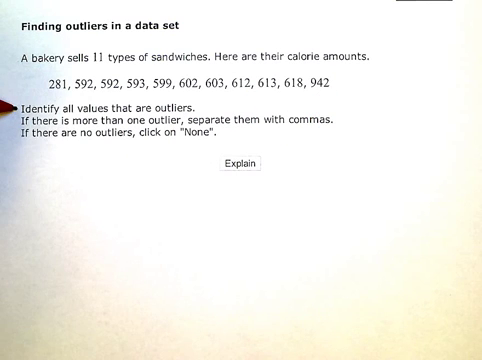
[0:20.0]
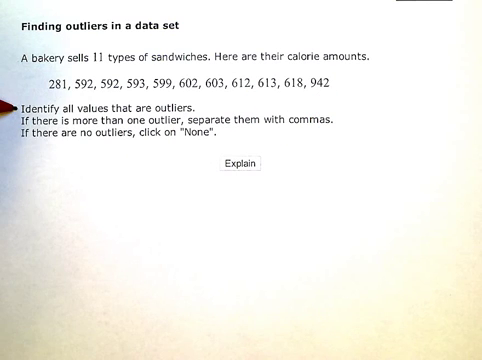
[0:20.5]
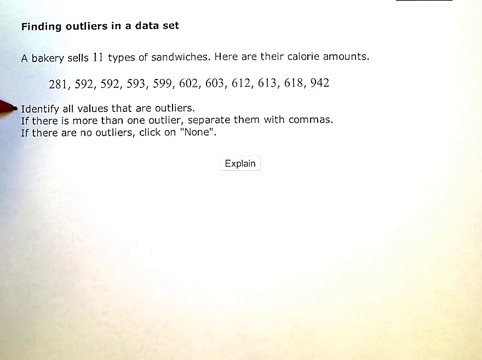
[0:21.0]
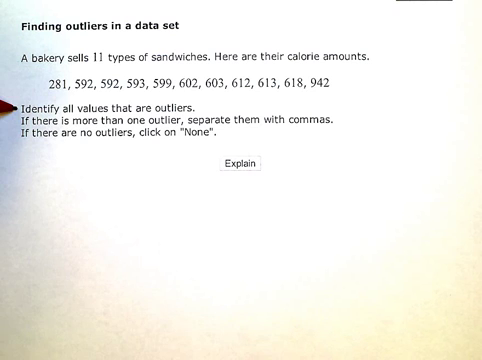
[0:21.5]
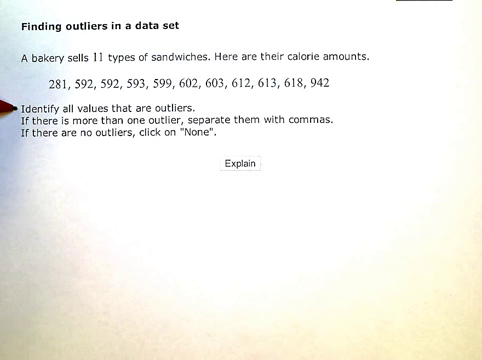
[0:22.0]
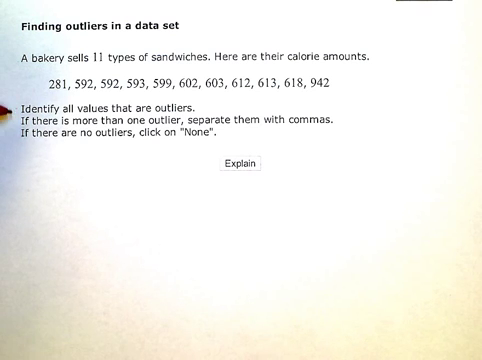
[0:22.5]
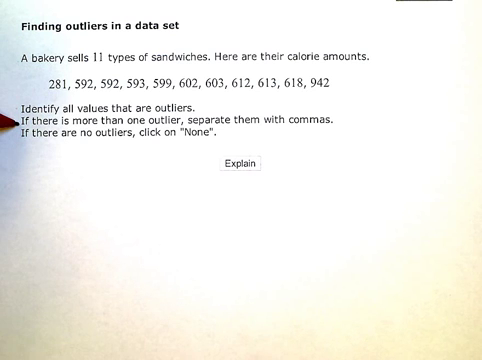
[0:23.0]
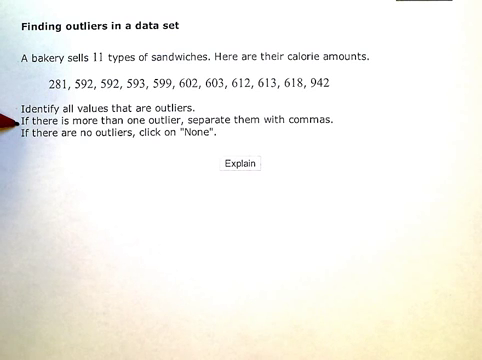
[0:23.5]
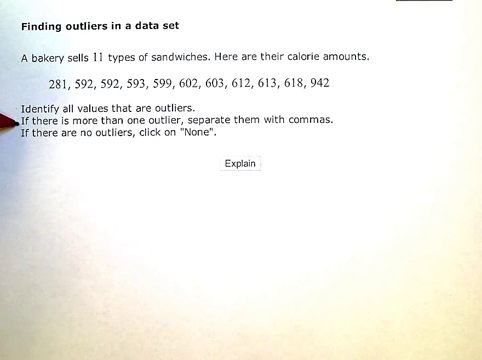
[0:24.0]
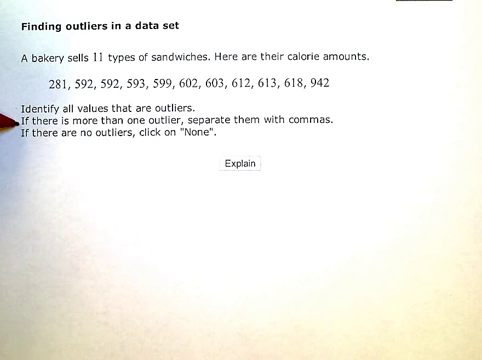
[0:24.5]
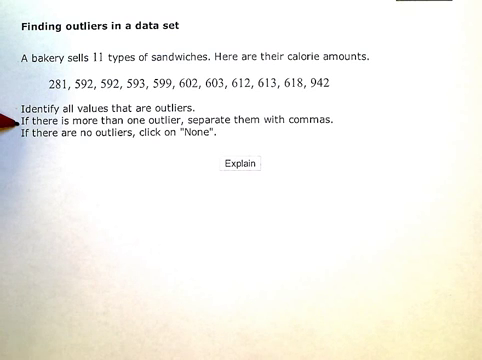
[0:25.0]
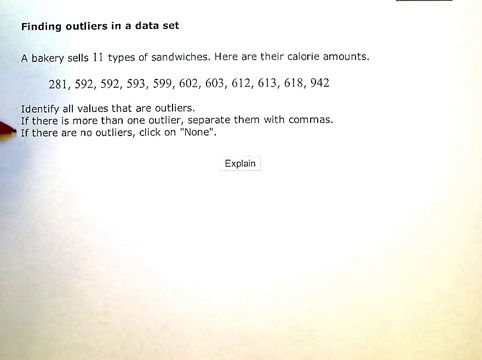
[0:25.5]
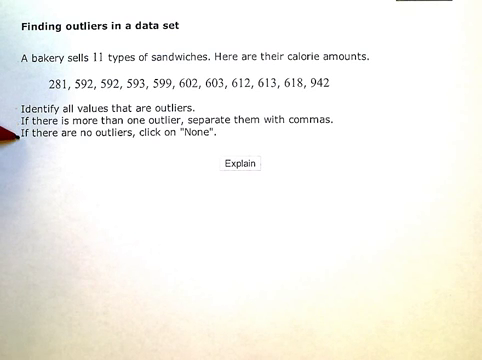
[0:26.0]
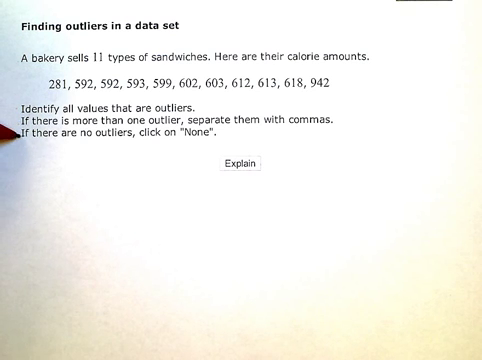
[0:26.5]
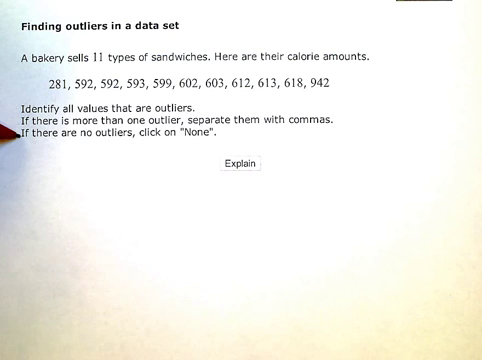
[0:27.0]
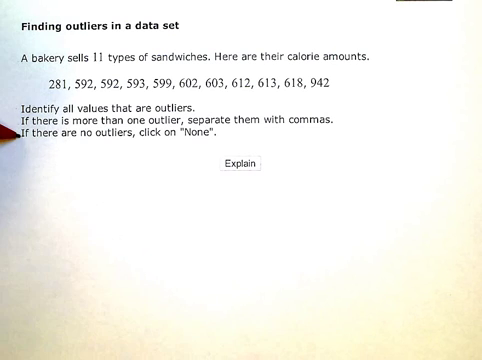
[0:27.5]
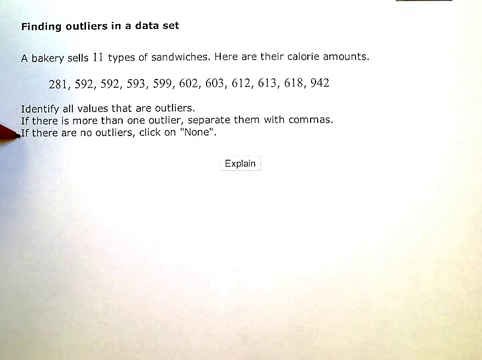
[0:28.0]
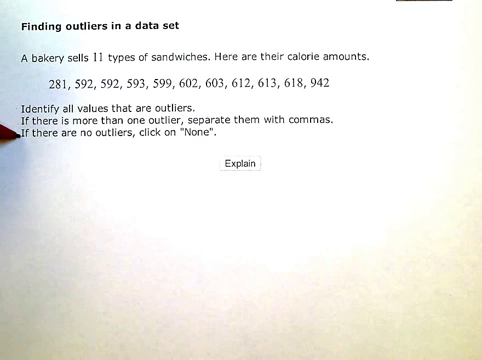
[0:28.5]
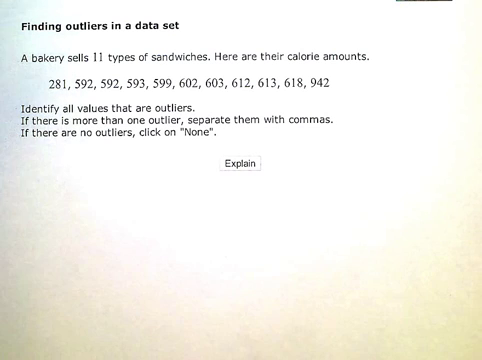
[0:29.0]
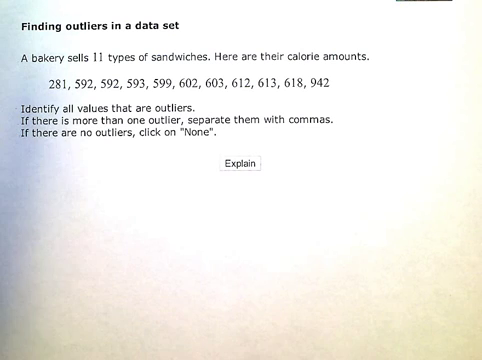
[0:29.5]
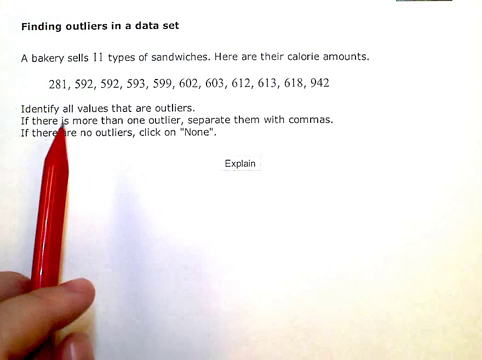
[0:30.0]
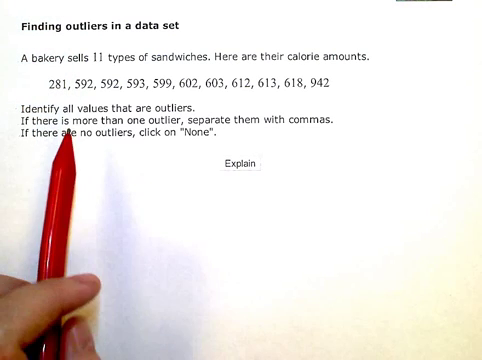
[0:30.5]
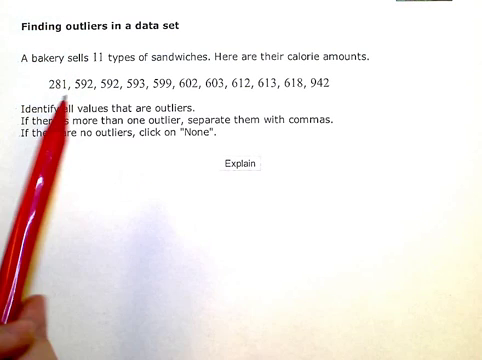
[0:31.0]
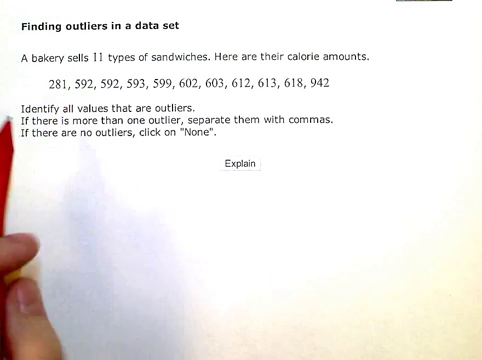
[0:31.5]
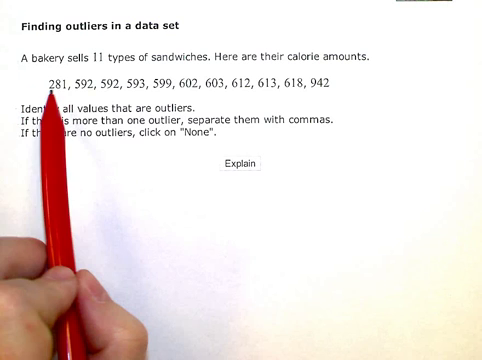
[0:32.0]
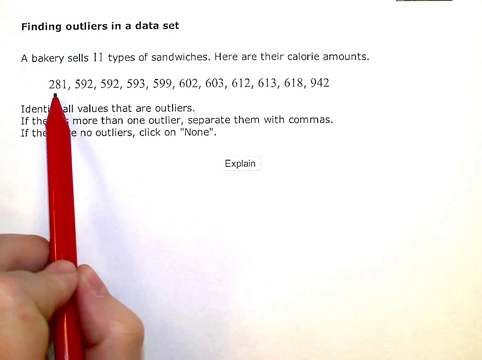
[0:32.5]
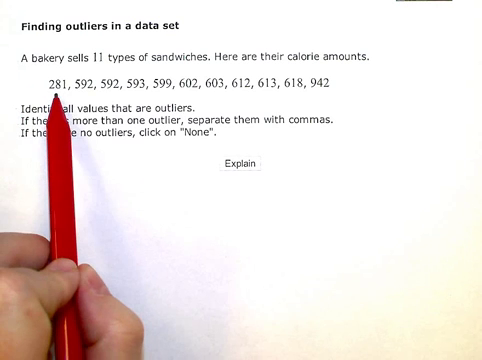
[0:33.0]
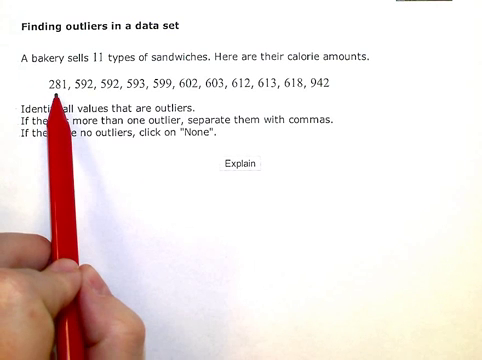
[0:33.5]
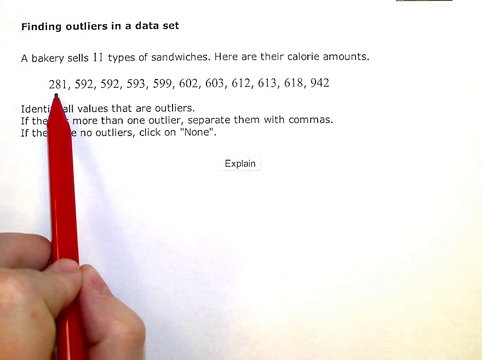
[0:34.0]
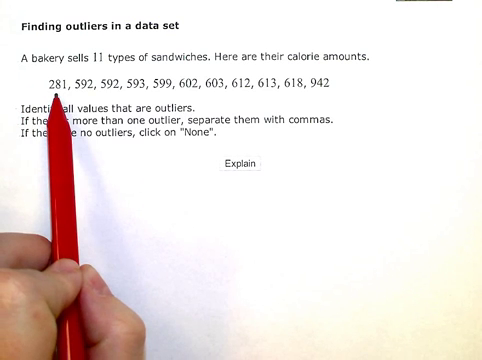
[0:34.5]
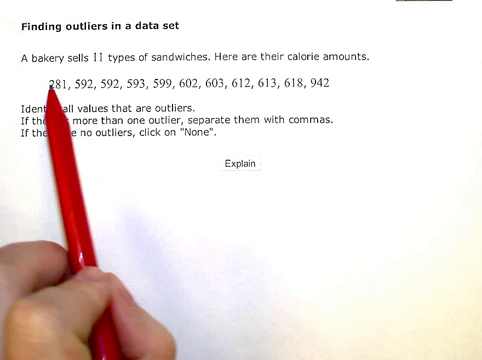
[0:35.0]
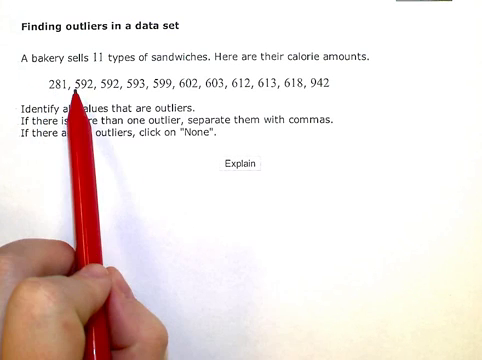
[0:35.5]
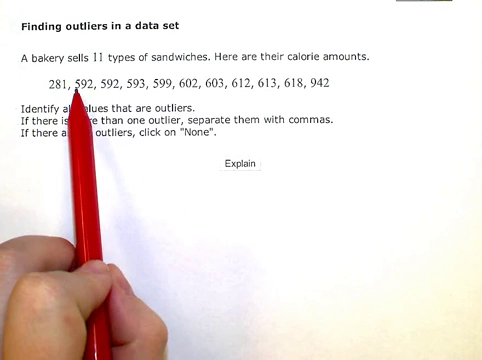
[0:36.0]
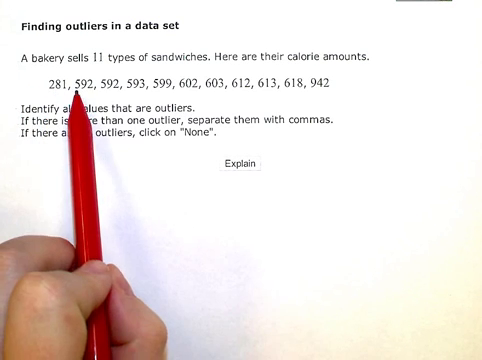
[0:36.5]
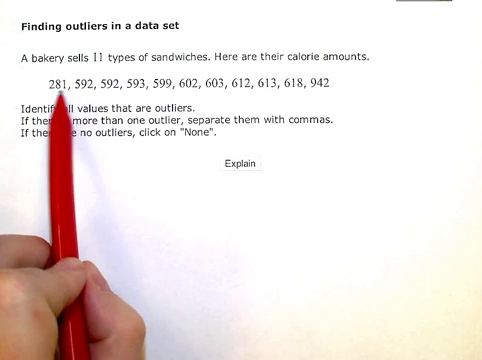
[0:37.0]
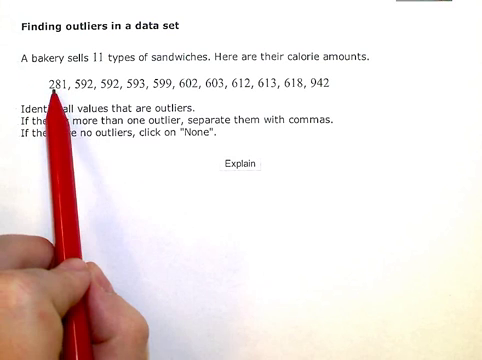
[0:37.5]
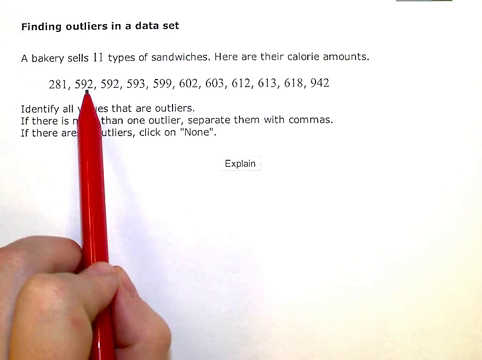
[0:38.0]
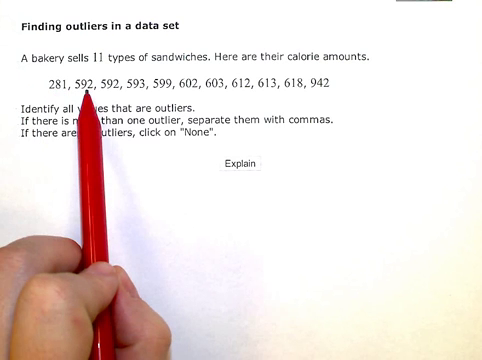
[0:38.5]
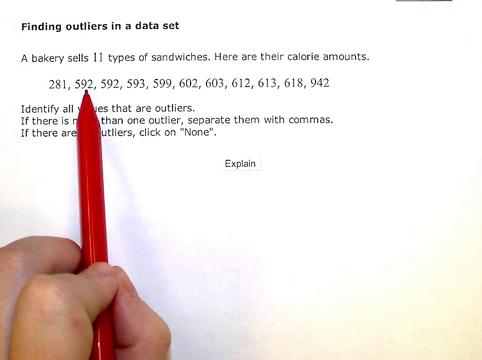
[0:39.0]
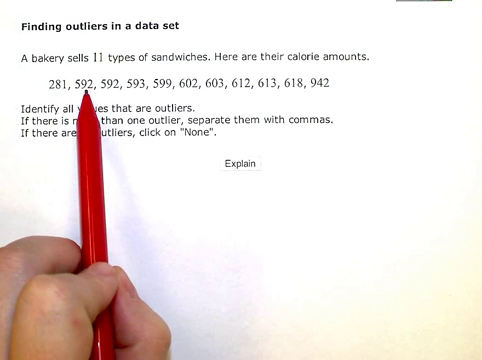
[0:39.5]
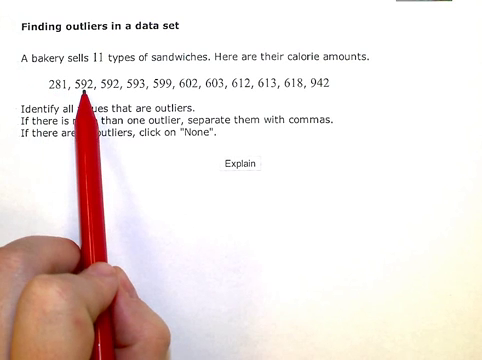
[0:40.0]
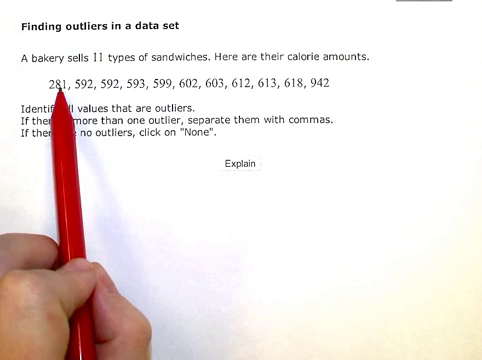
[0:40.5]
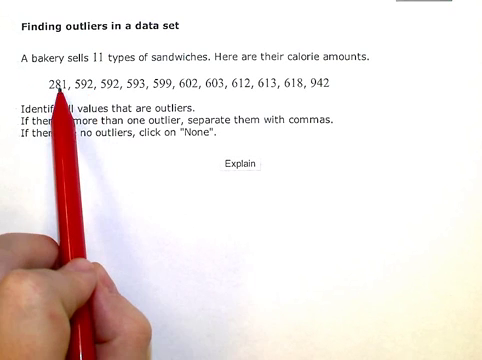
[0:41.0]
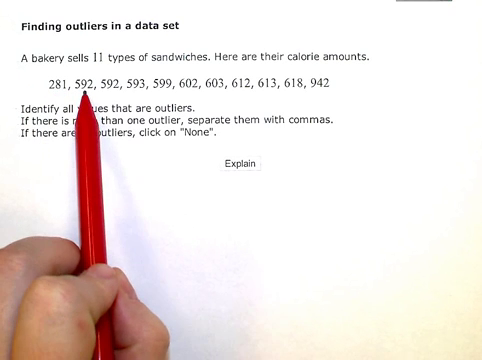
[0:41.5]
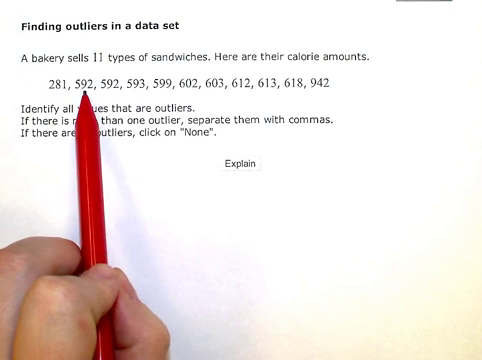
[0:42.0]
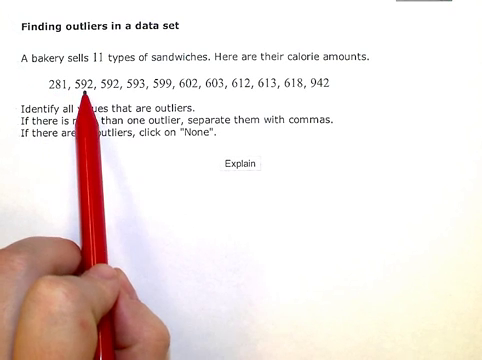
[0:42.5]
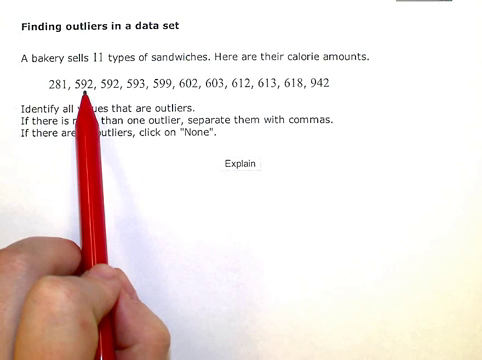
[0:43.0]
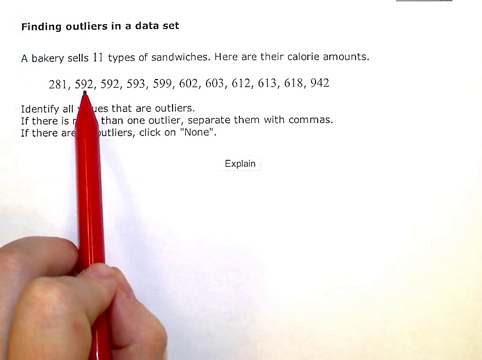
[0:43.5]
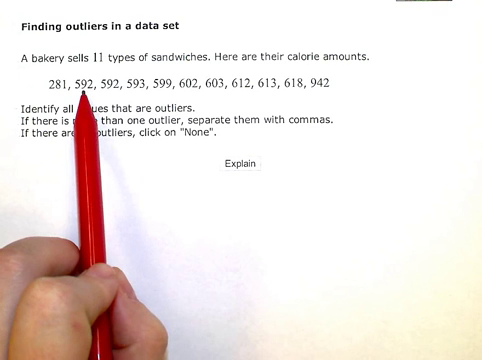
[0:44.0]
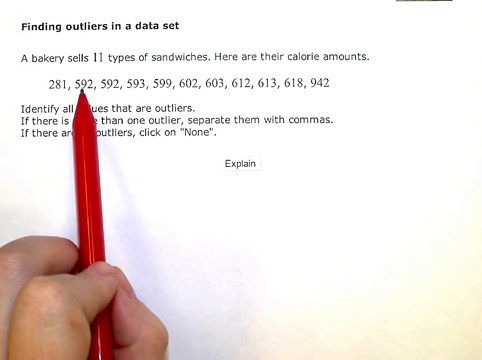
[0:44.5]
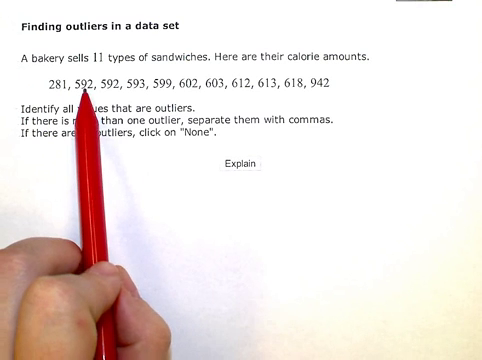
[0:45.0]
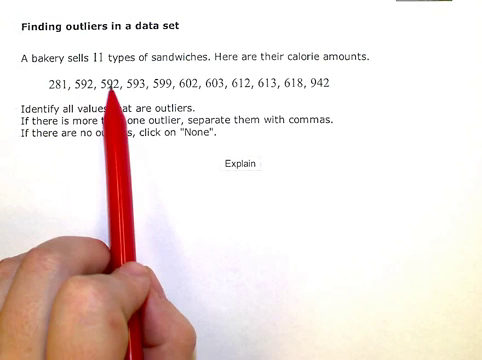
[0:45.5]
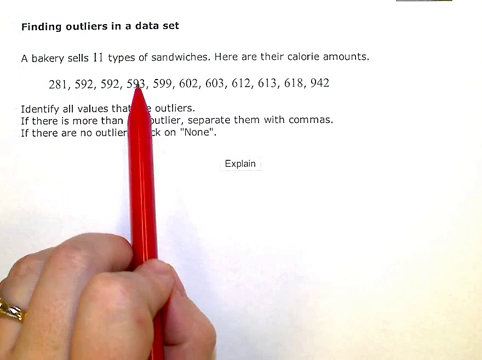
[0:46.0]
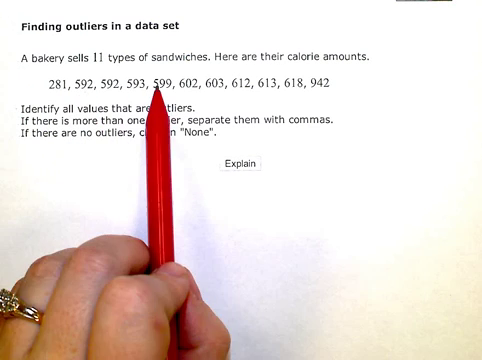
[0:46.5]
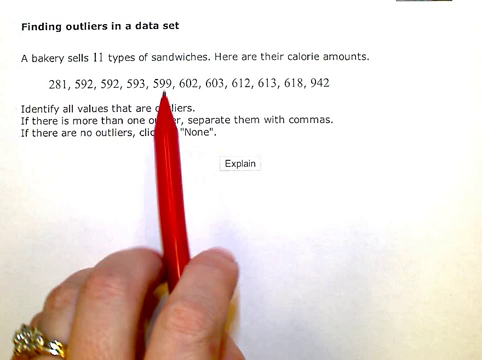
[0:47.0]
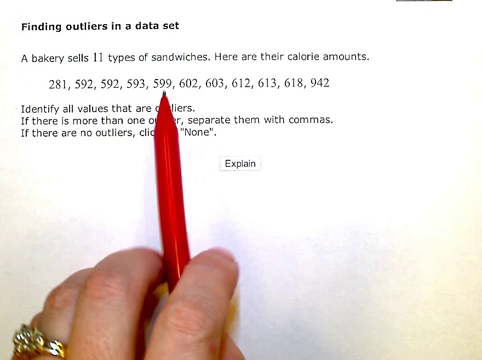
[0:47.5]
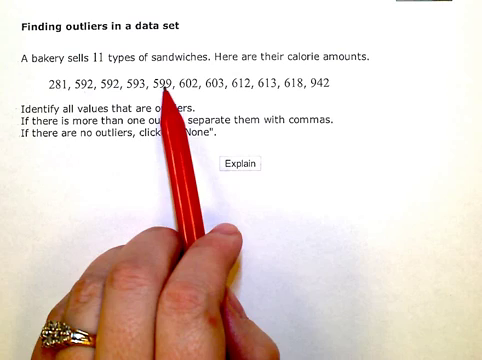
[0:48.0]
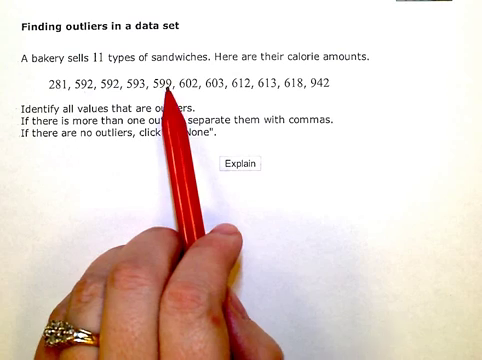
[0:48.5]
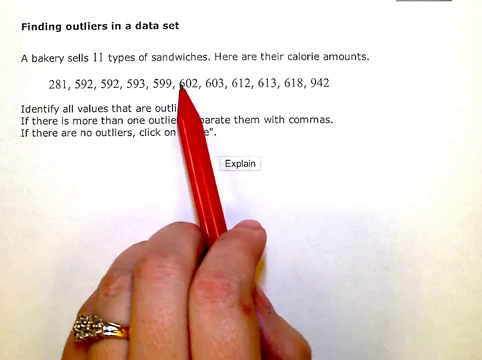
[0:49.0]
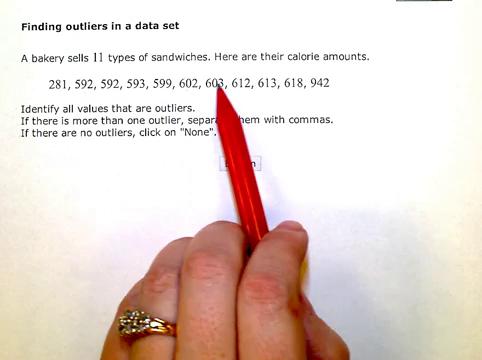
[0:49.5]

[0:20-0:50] The pen nib rests against the line of the sentence that says "identify all values that are outliers," then moves down to the next line of text and finally to the third line before disappearing. A moment later the red pen reappears, held between the index and first finger, with the index finger more curled than the first finger, and is used as a pointer. It points to the first number in the list, 281, moves across to 592 and back to 281, jumping between the two numbers left to right, and goes all the way across the page. A ring is visible on the ring finger of the hand; all the fingers are curled and the pen slides between the first and index finger, held in place there as it moves across the diagram. It continues all the way to the right-hand side and then back again.